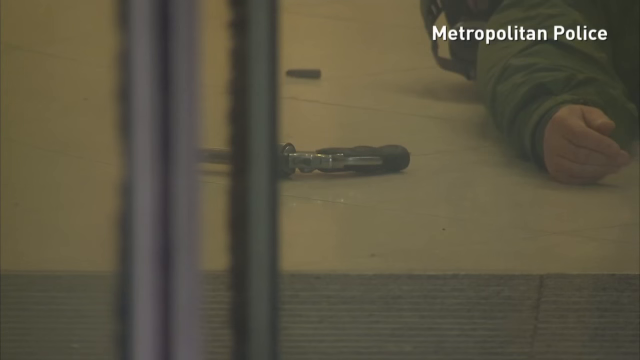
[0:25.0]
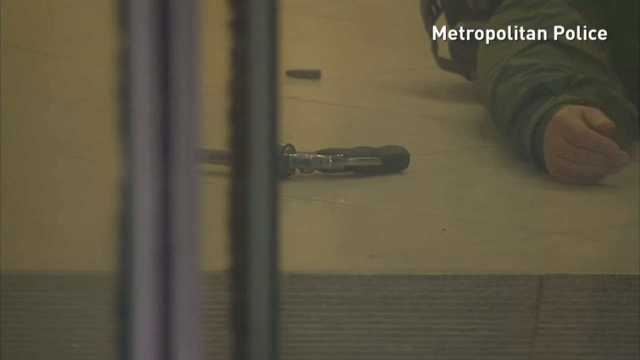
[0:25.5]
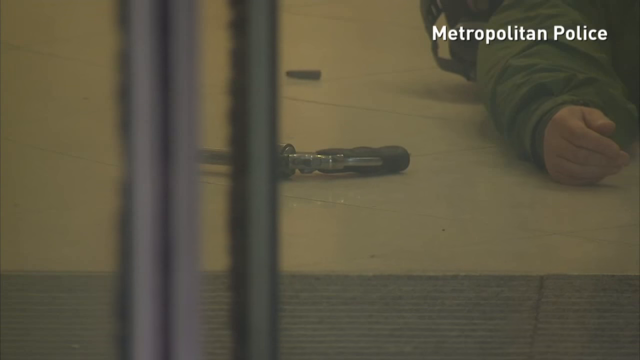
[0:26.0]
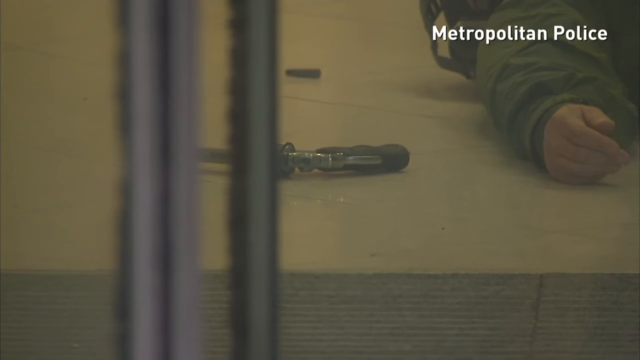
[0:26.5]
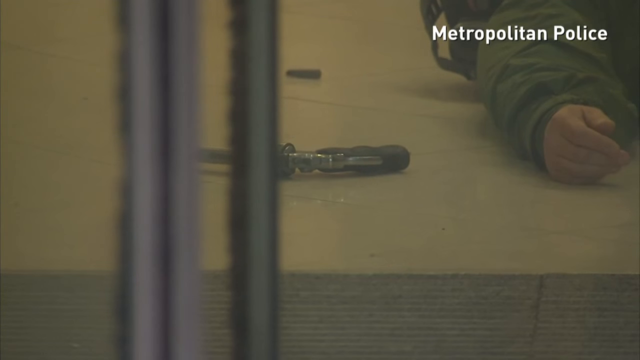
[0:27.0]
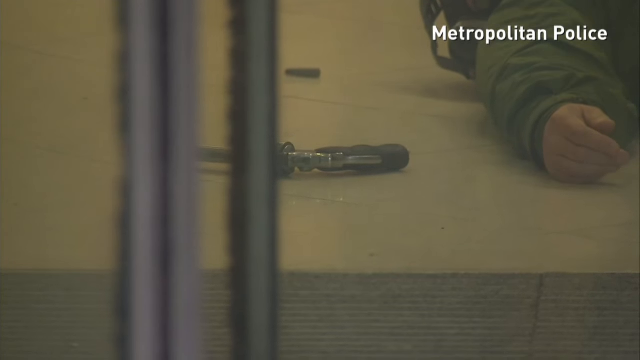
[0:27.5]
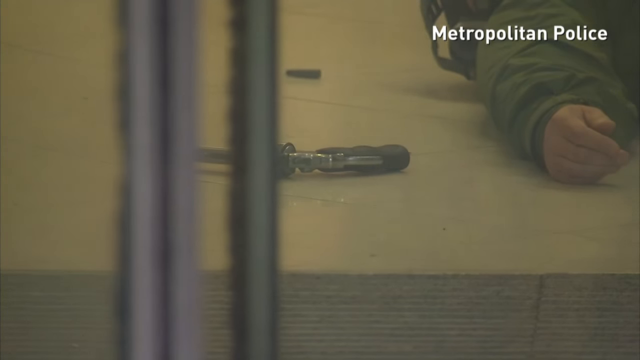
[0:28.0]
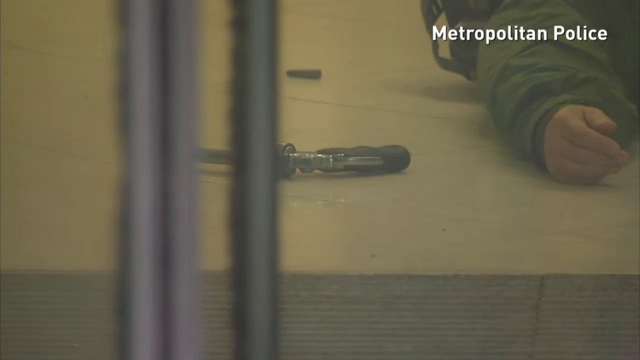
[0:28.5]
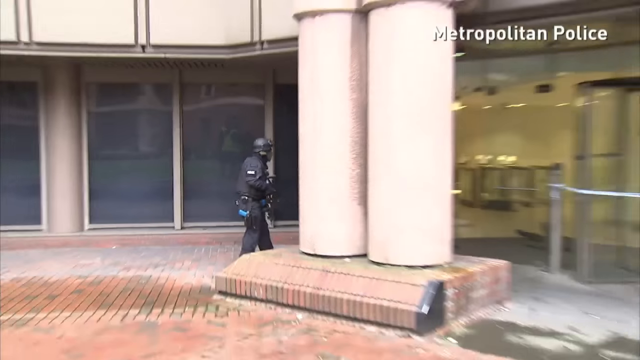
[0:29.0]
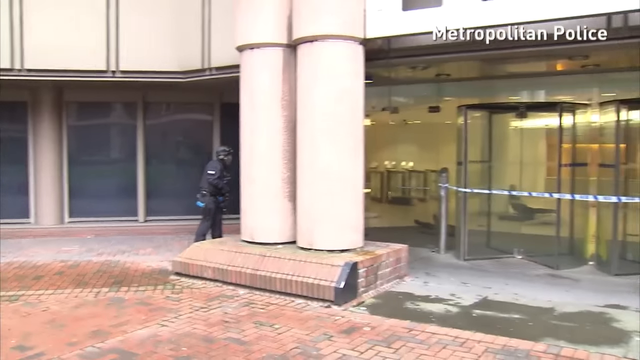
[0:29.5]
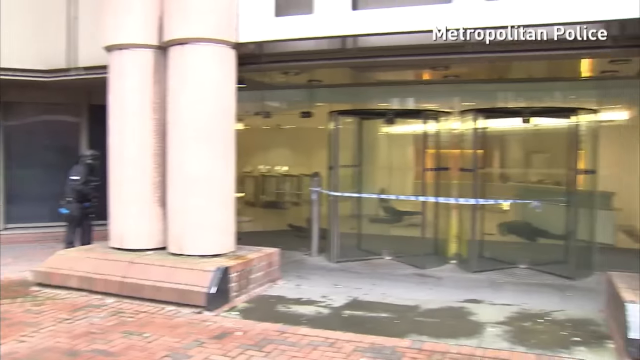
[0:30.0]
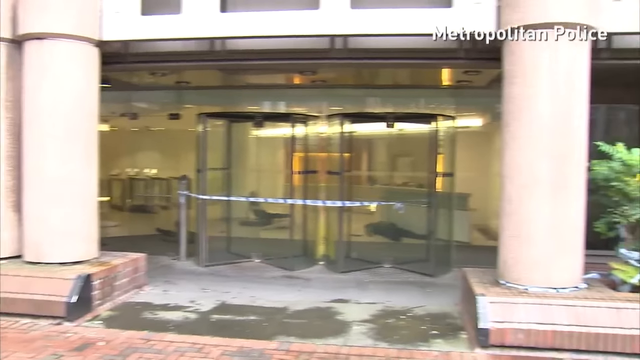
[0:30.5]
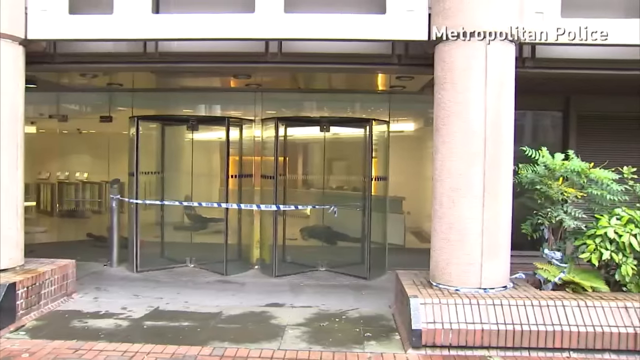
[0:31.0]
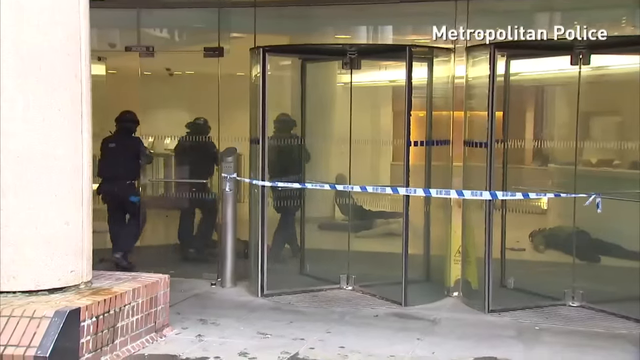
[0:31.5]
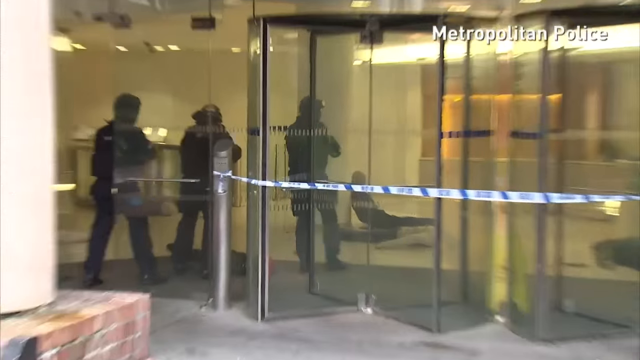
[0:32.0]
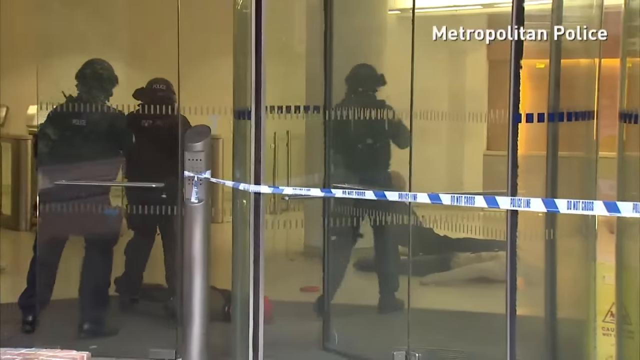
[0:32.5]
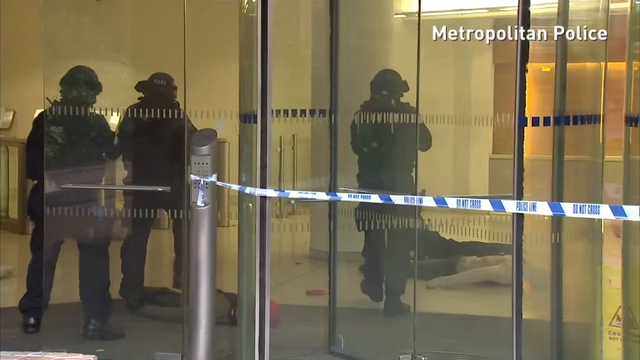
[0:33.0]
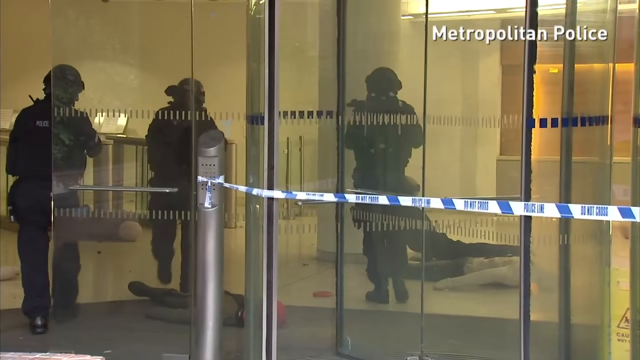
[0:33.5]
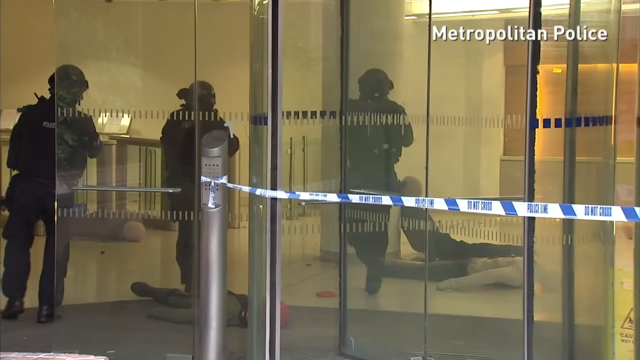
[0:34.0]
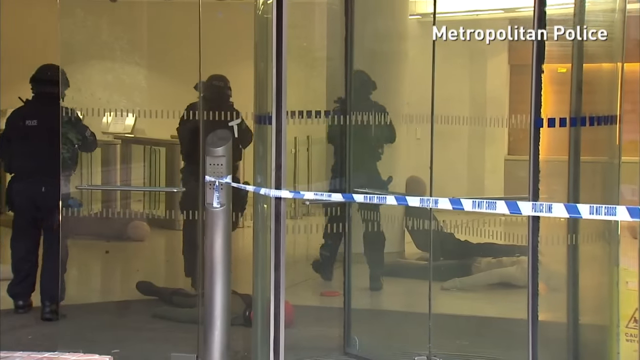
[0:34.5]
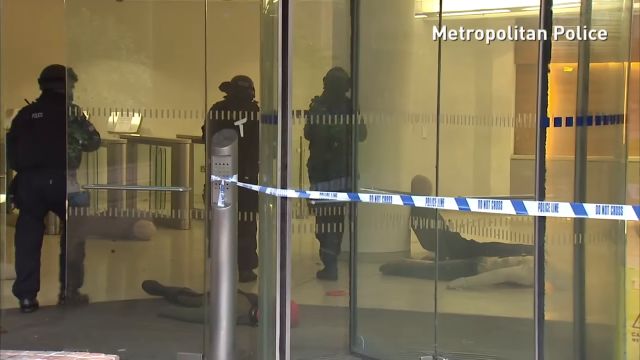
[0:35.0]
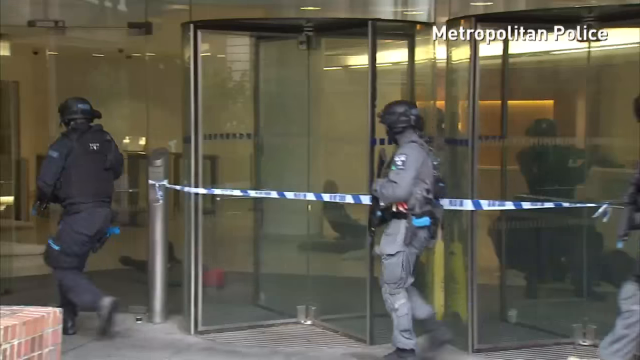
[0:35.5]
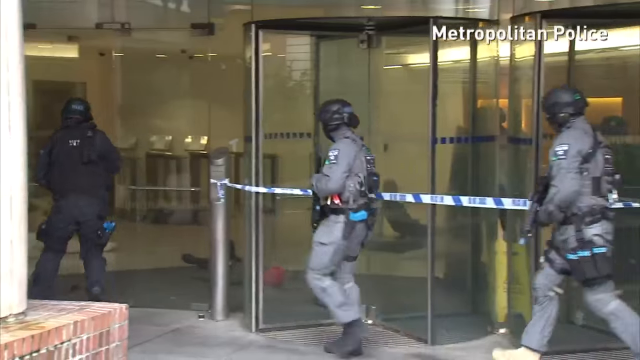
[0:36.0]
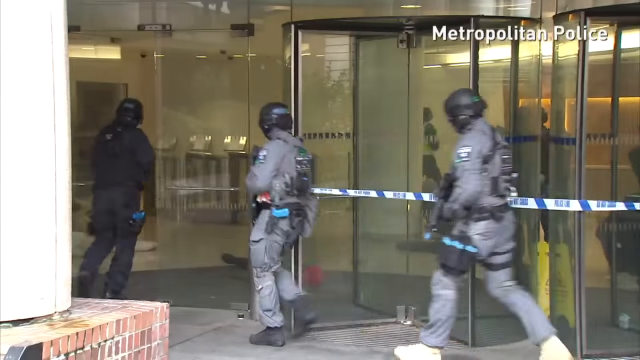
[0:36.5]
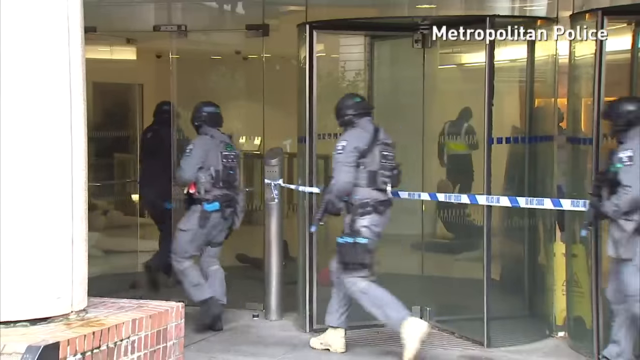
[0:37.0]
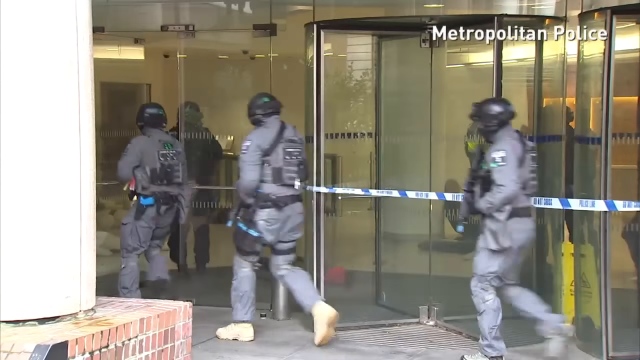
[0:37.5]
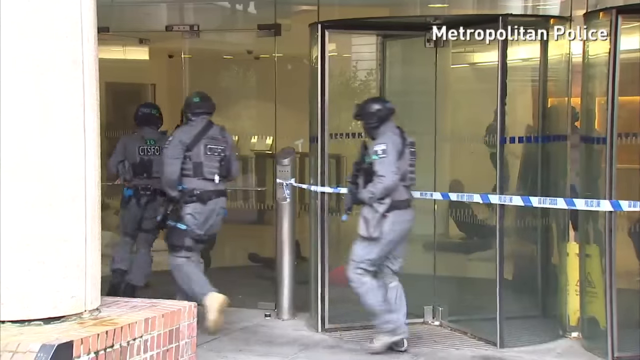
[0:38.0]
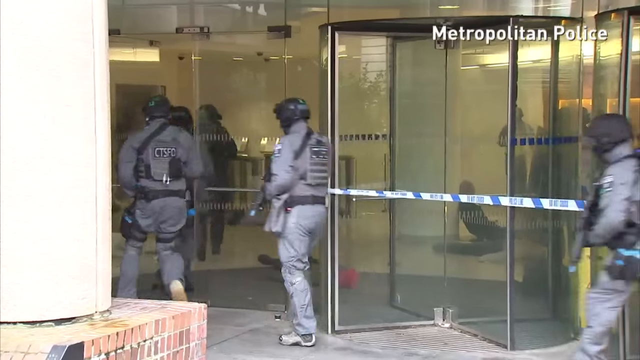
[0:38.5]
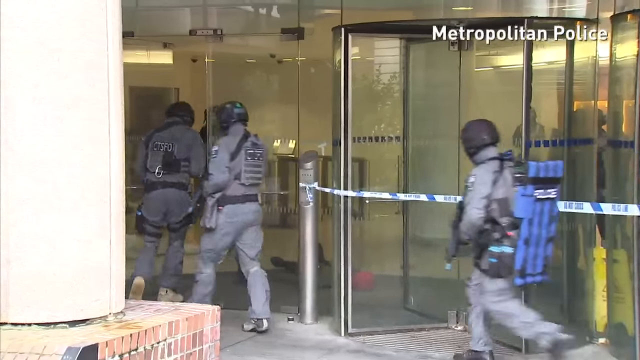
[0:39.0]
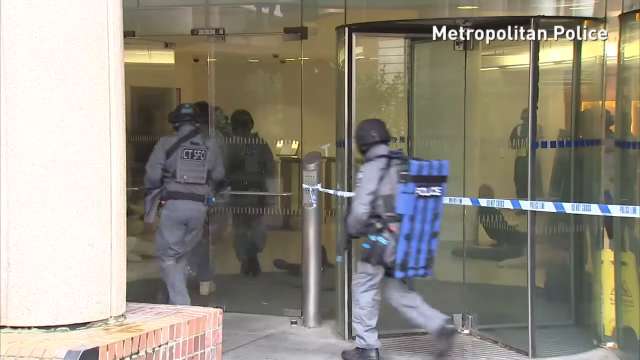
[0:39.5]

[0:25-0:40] The skit is over. Some of the people lying on the ground have guns near their hands. The policemen have apparently killed the attackers, and backup can be seen coming. The scene seems still and calm, as though everything is under control. In the top right corner is "Metropolitan Police," and in the bottom left there is a red square reading "ODN," possibly the channel.